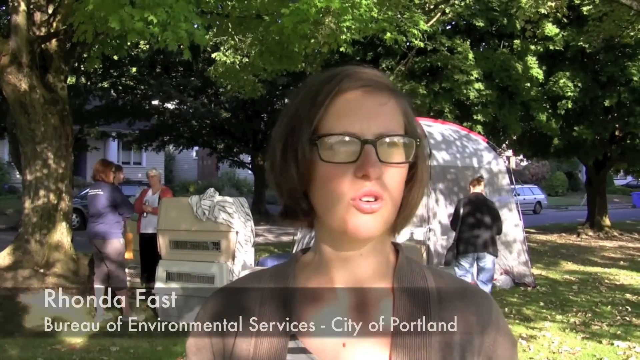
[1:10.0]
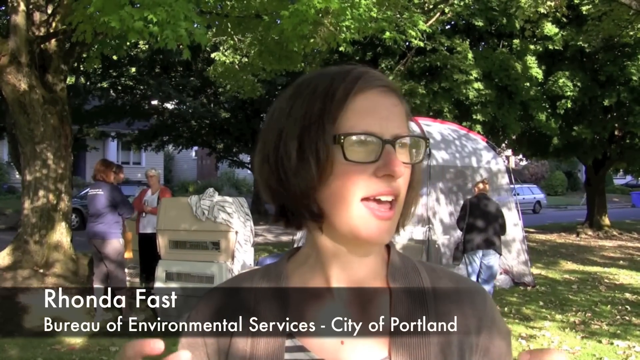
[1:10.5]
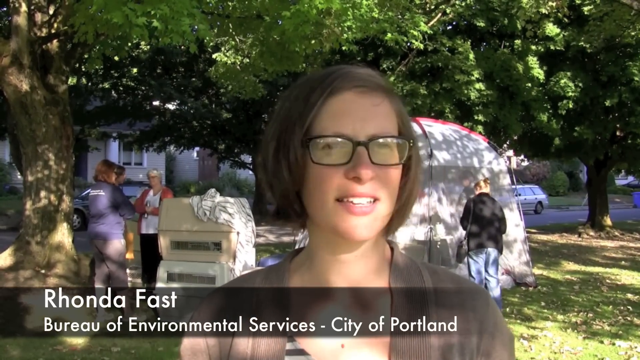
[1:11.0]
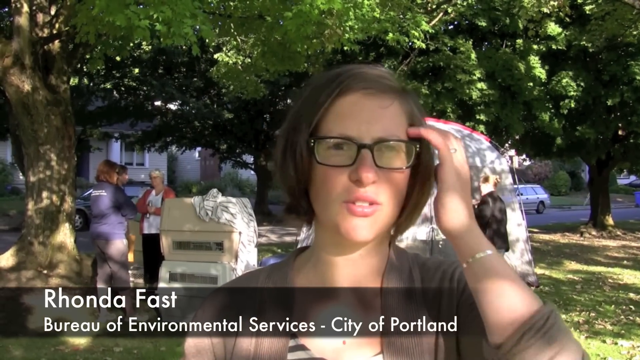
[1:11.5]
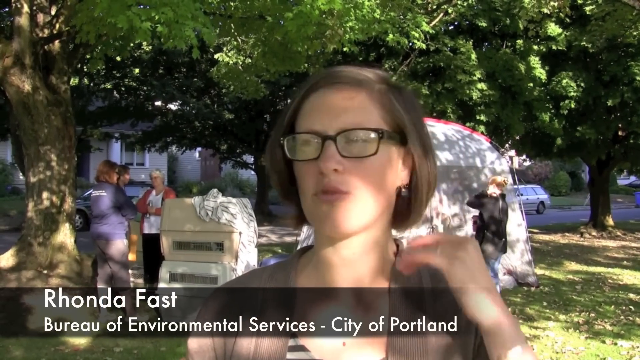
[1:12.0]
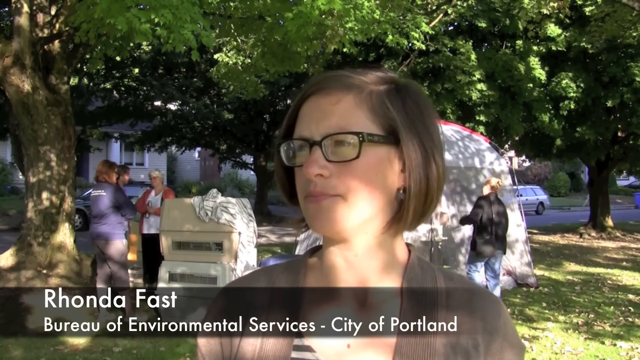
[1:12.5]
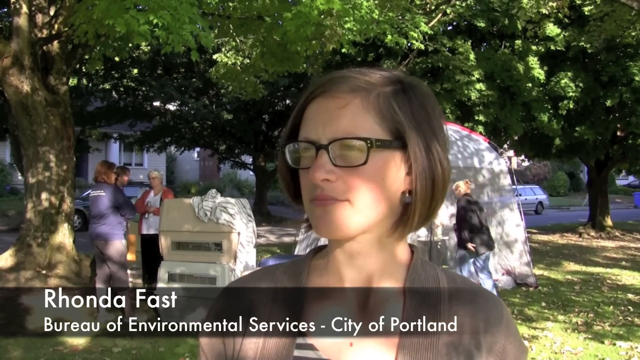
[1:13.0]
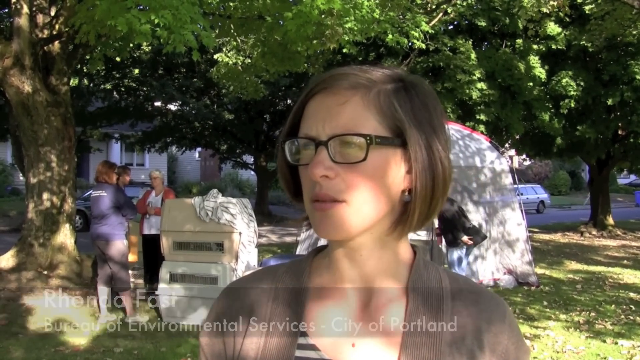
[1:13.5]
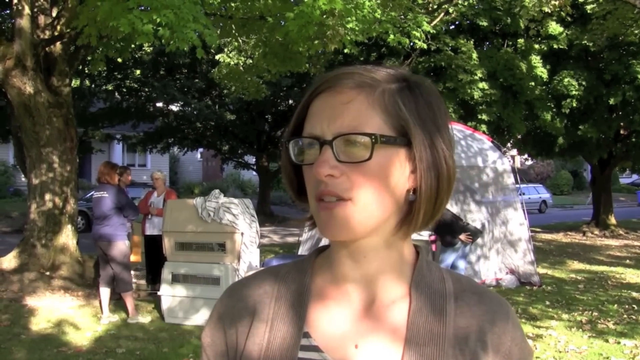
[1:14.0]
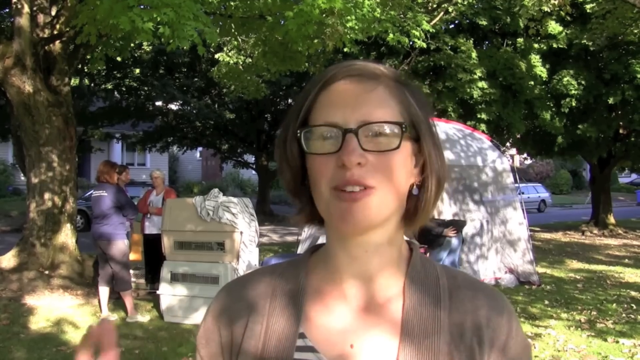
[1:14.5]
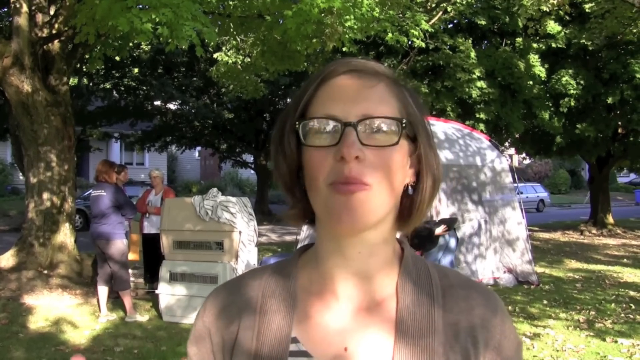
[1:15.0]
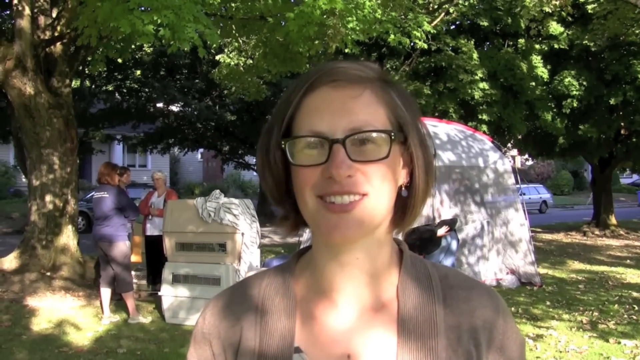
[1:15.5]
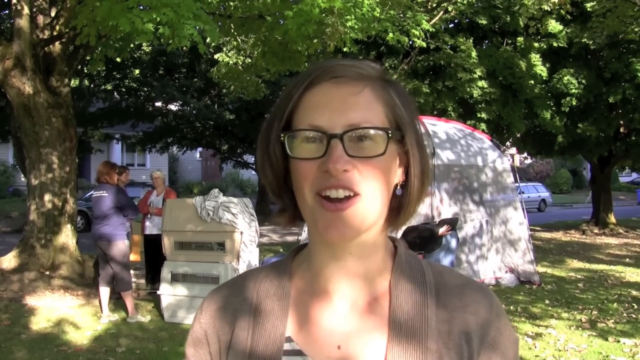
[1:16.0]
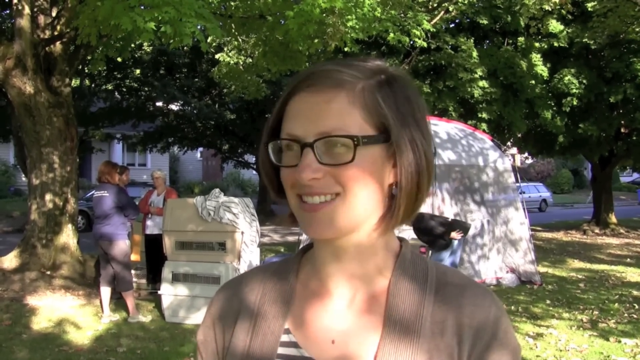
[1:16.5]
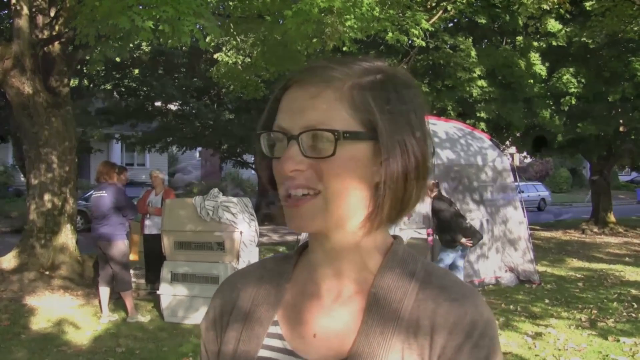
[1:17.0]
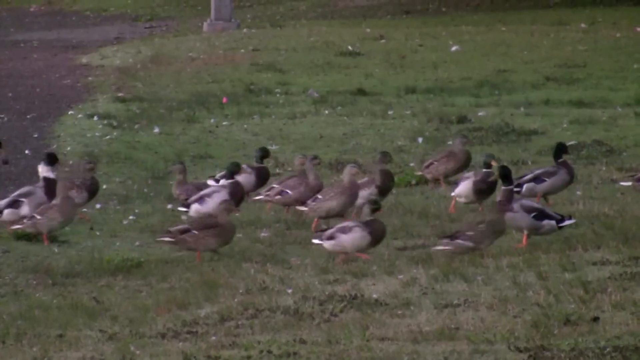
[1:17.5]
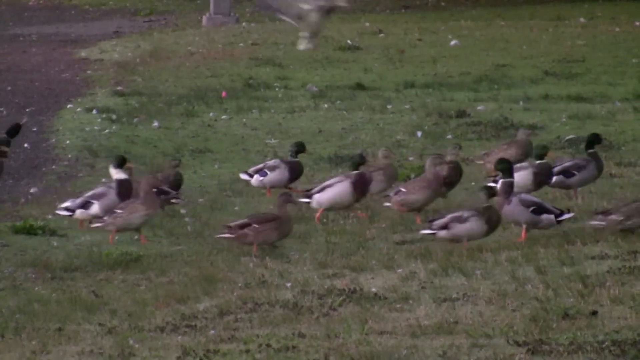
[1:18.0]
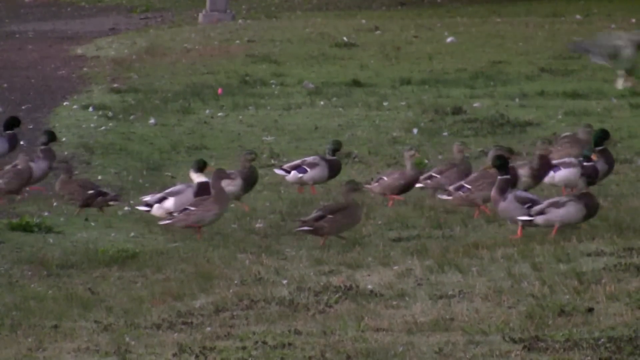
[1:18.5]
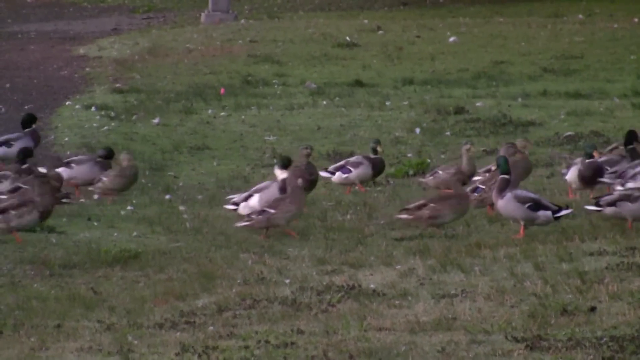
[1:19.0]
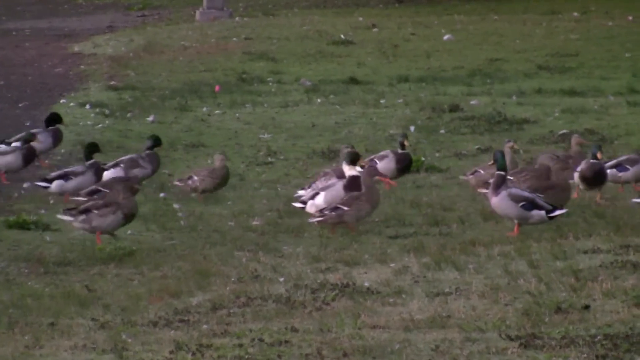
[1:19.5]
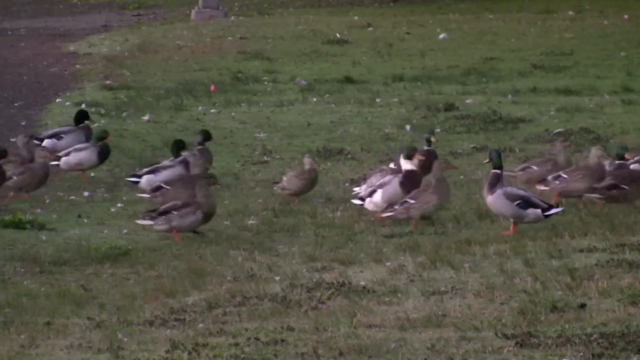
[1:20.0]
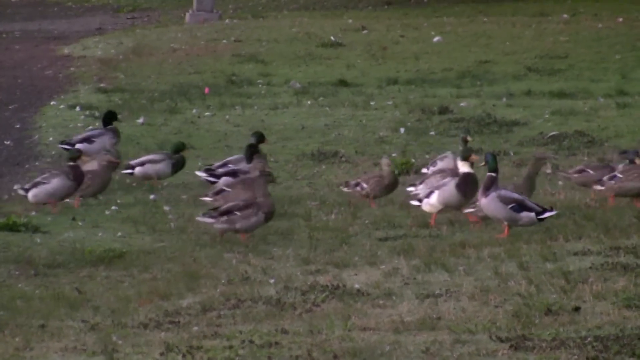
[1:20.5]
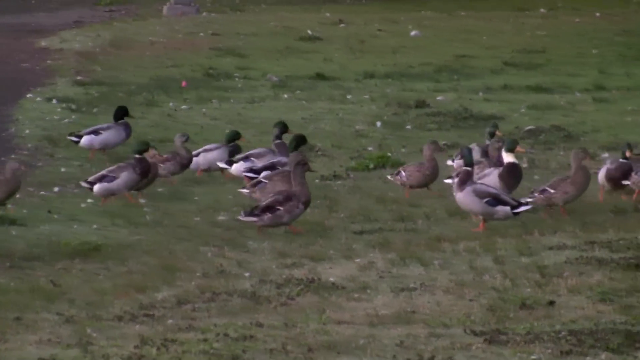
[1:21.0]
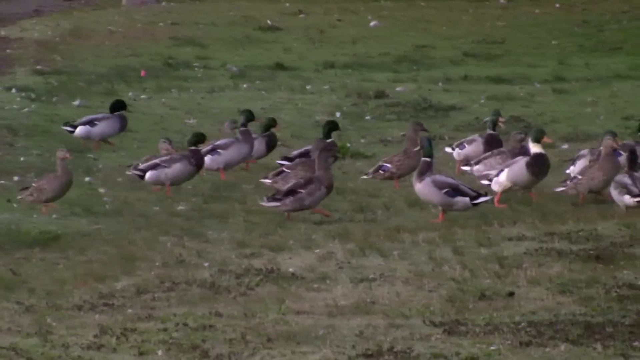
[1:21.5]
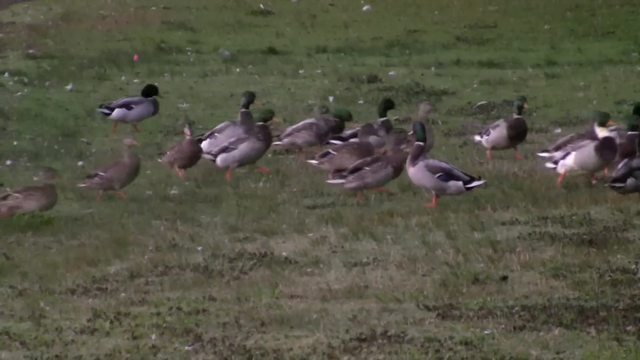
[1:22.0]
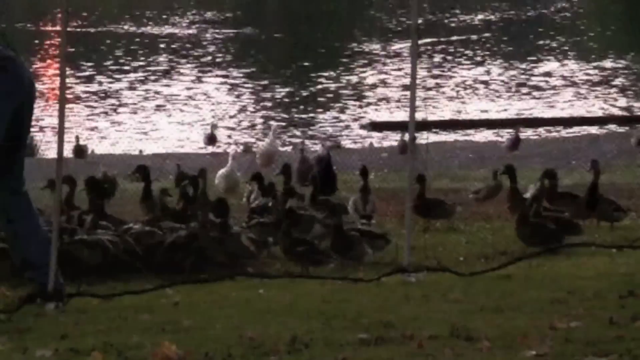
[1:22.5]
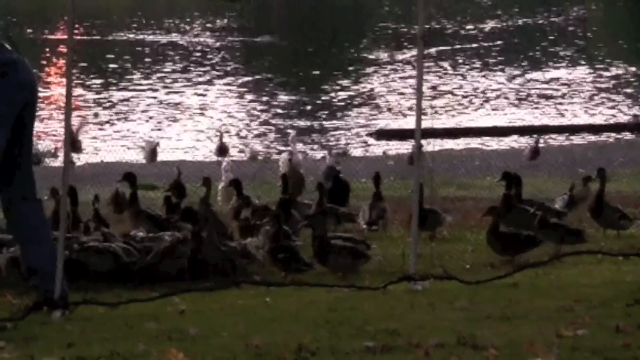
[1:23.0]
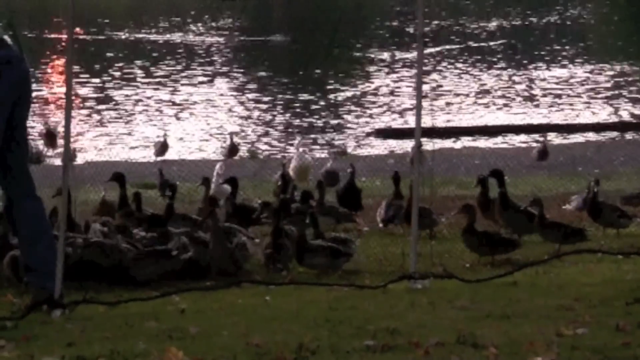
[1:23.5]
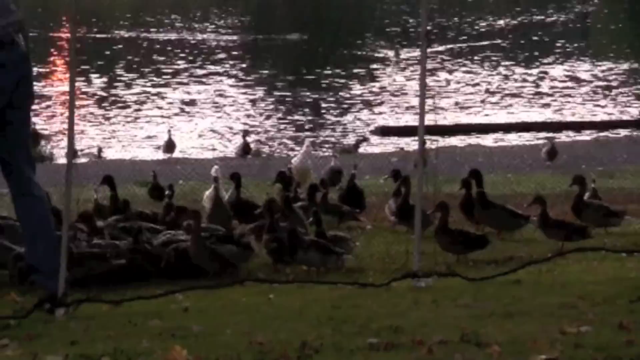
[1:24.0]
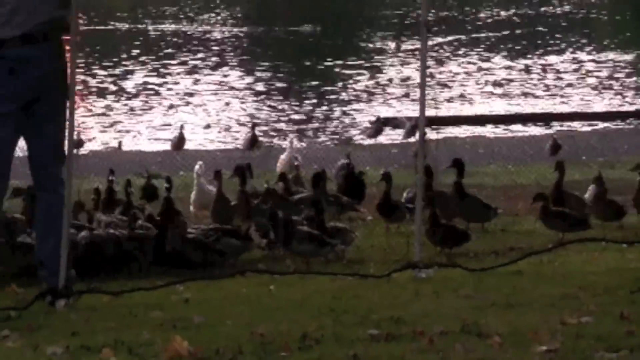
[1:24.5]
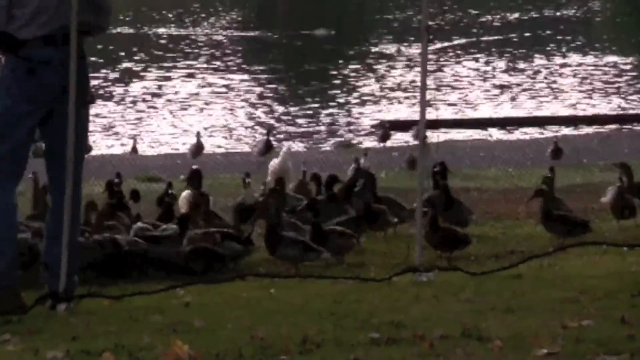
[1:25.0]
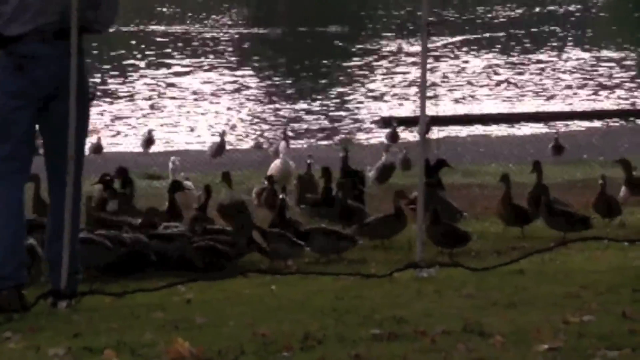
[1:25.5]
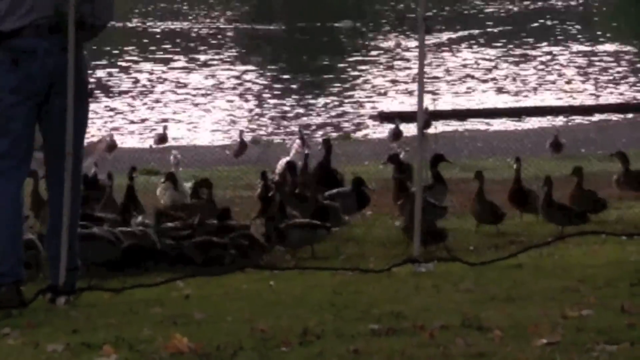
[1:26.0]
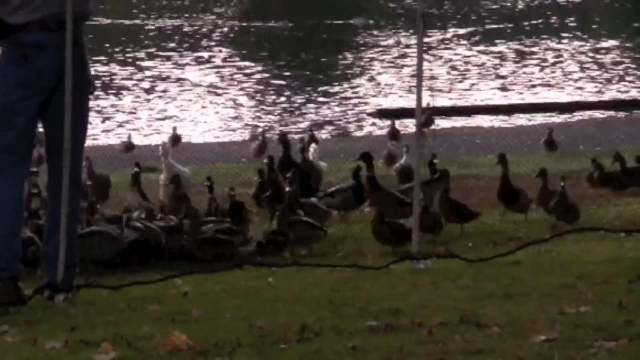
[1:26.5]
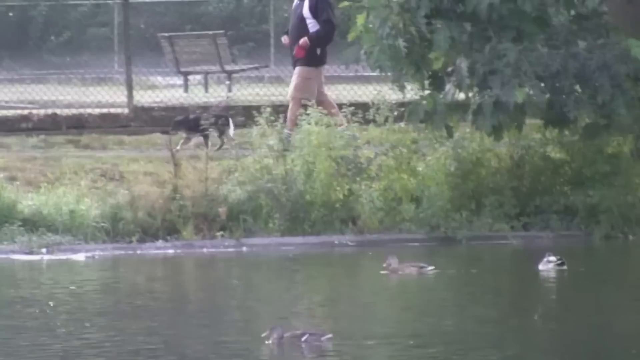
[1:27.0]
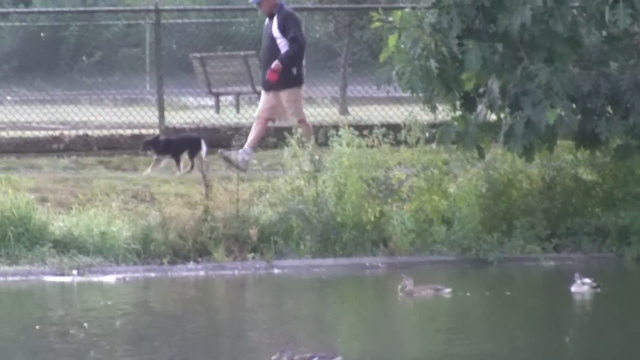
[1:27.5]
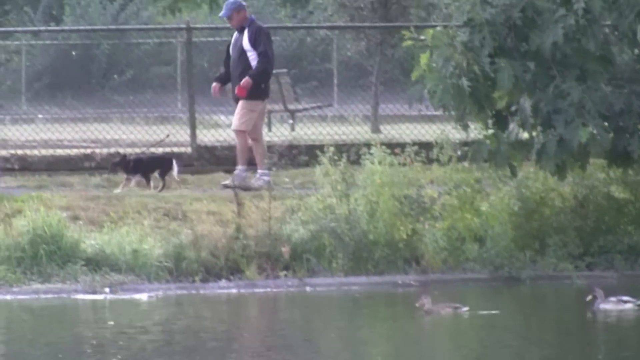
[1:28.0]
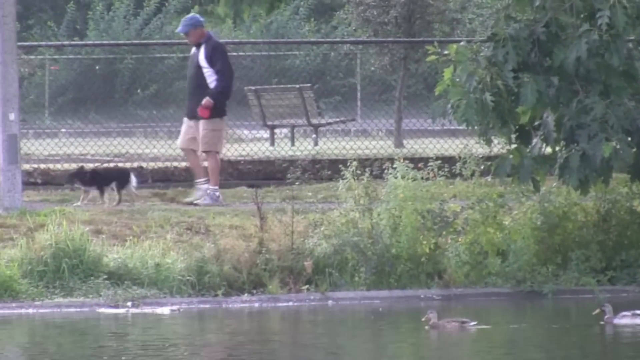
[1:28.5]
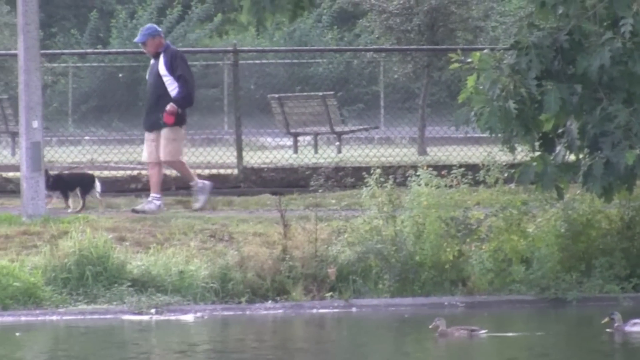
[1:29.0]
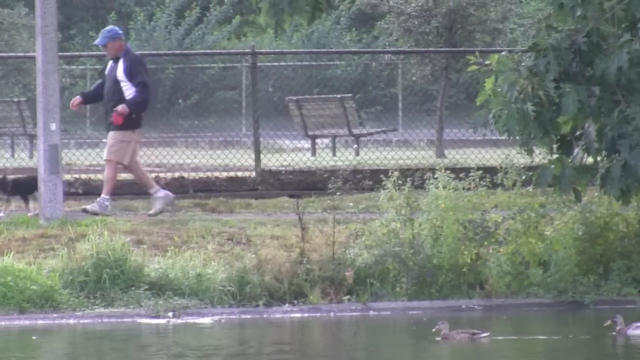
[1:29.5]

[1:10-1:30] A middle-aged white woman with short brown hair parted to the right, black-framed glasses, a gray shirt and a bracelet on her left wrist is identified as Rhonda Fast, Bureau of Environmental Services, City of Portland. Behind her are animal crates stacked in twos, with three middle-aged women standing around them. There is a white curved-dome tent, with a woman in a black jacket and blue jeans standing on its right side. Several large trees in the background shade the grassy area. She gives an interview, speaking to the camera, looks to her right and then back to the camera with a smile. The video cuts to many mallards running across a road onto a grassy park area, then to a multitude of ducks, approximately 20 to 30, gathering on the shore near a pond. Next, a white man in a blue cap, beige shorts and white tennis shoes walks a small black and white dog along a chain-link fence with a bench behind it, with a pond area with tall grass on his left. He passes a large metal pole.